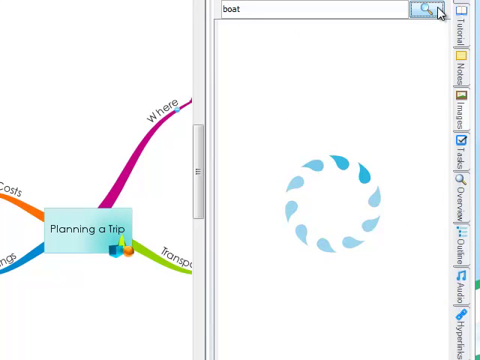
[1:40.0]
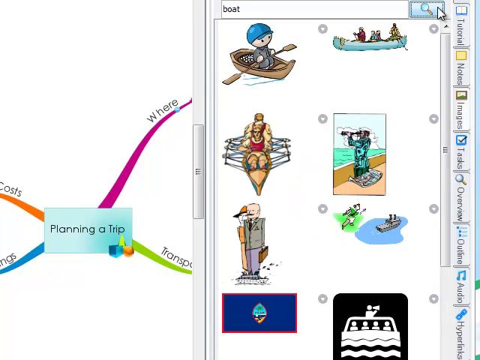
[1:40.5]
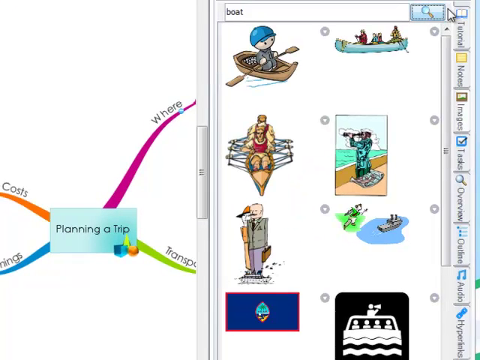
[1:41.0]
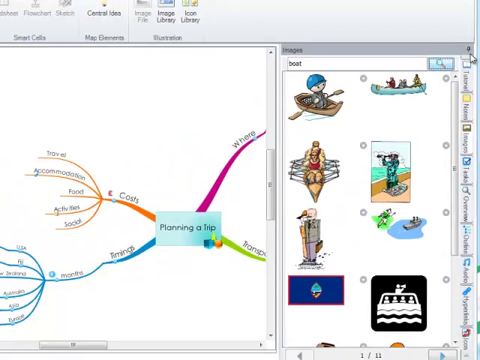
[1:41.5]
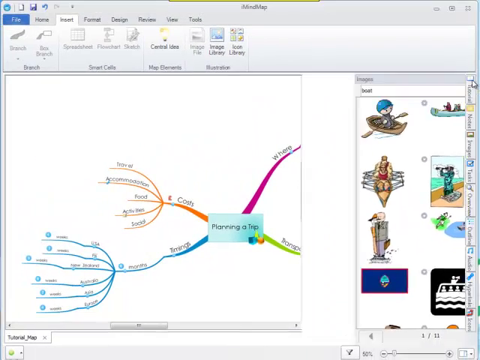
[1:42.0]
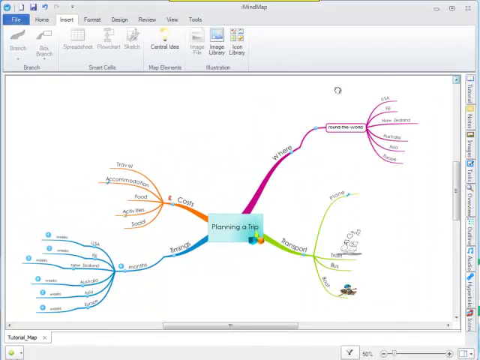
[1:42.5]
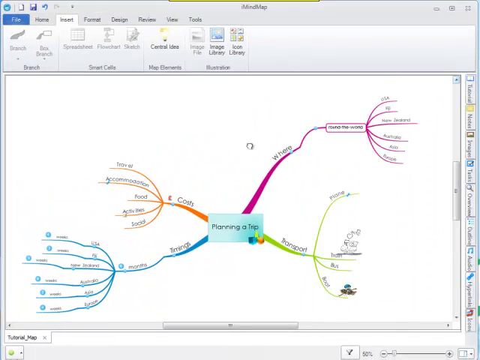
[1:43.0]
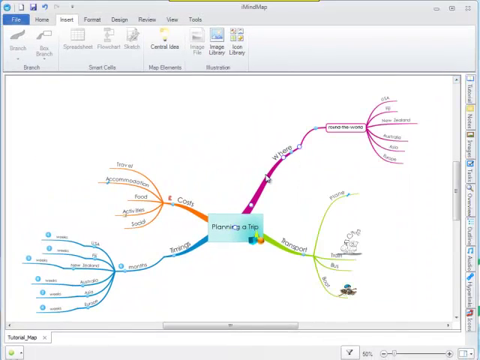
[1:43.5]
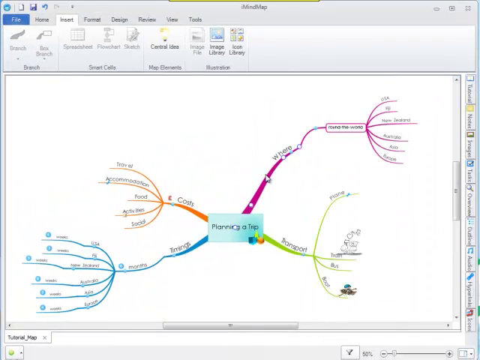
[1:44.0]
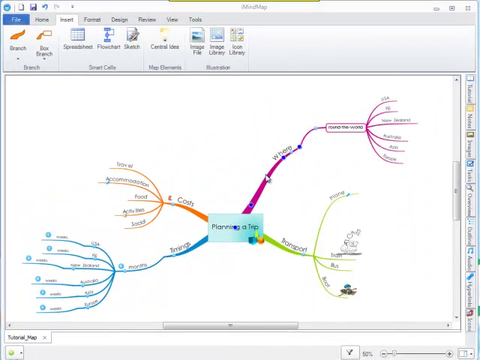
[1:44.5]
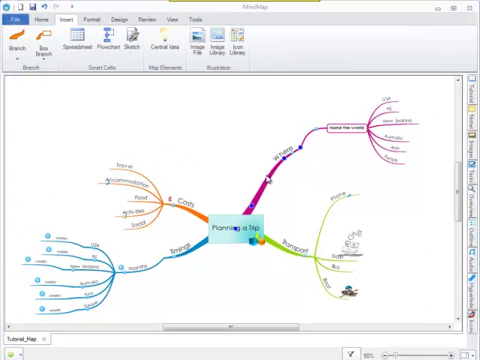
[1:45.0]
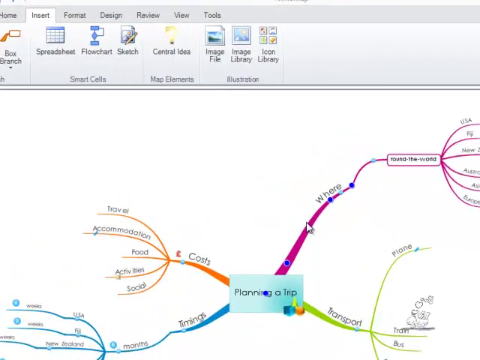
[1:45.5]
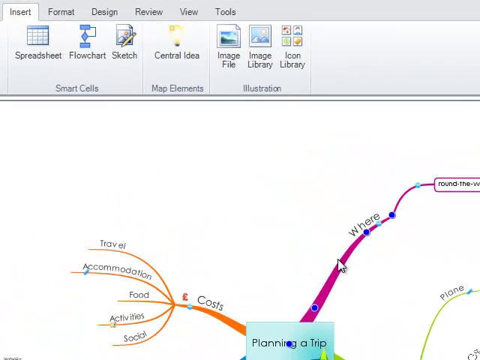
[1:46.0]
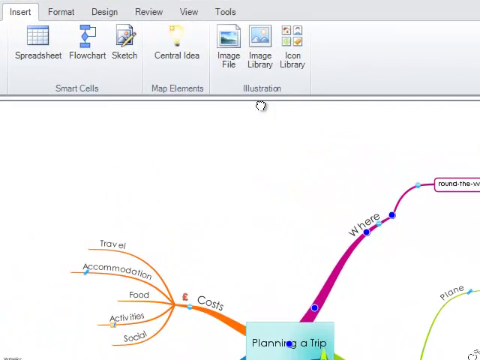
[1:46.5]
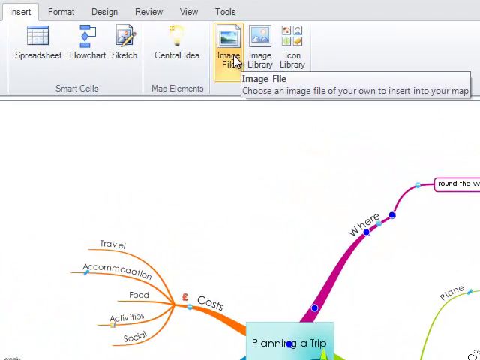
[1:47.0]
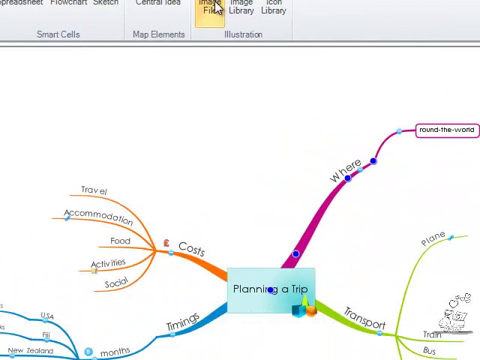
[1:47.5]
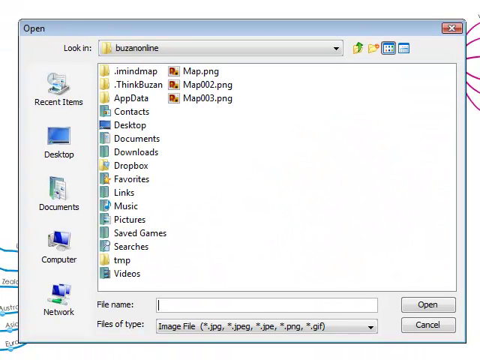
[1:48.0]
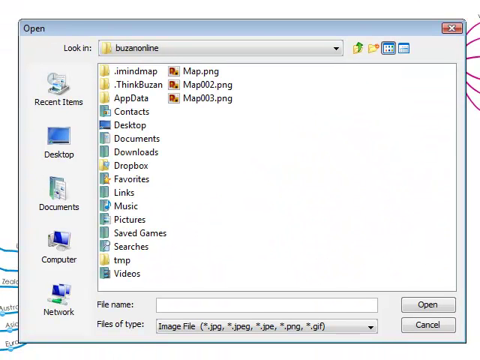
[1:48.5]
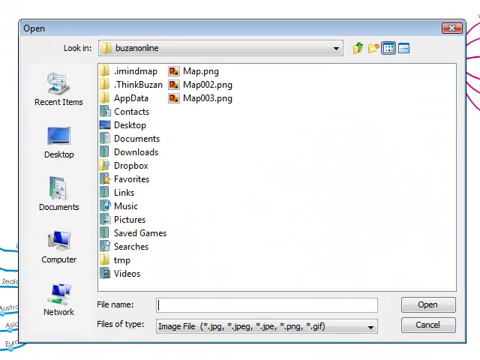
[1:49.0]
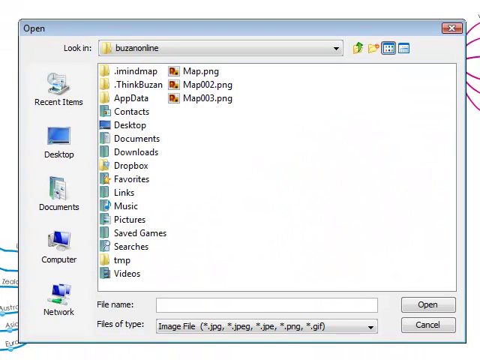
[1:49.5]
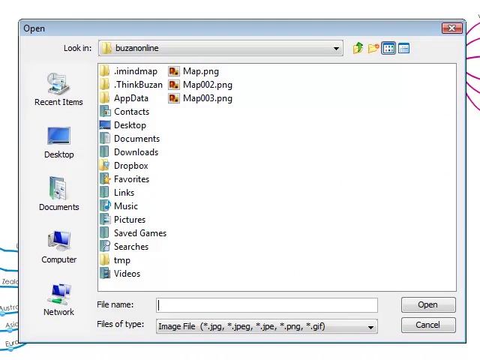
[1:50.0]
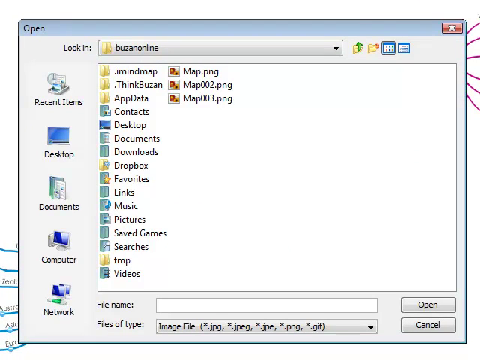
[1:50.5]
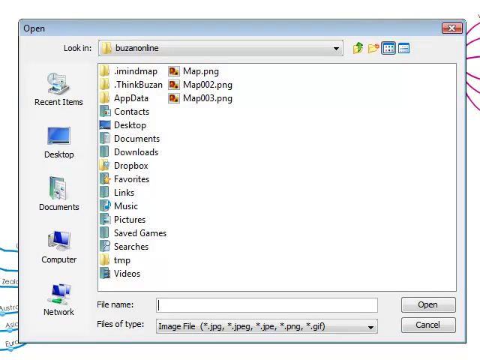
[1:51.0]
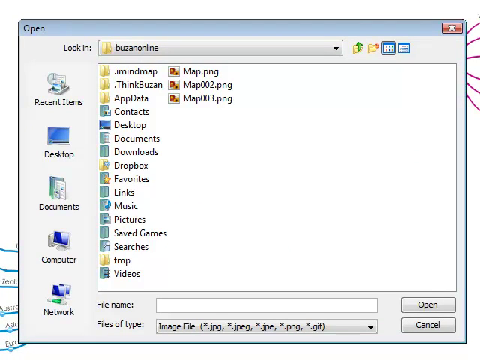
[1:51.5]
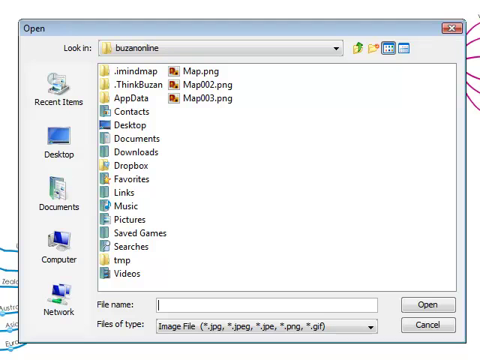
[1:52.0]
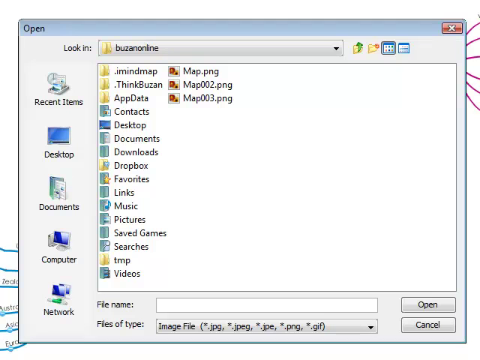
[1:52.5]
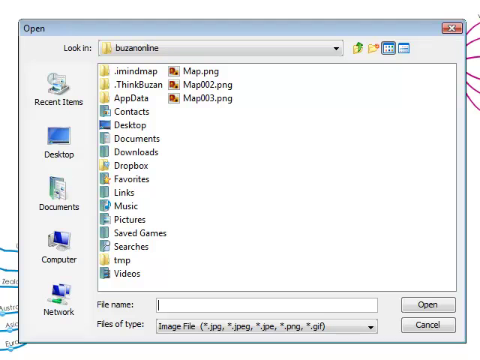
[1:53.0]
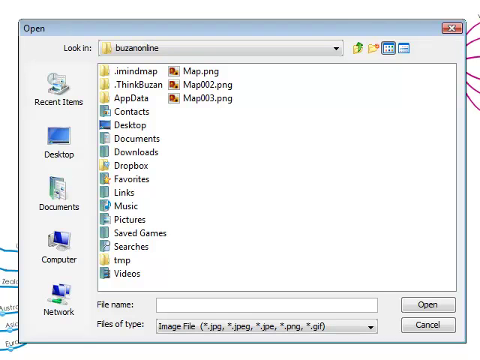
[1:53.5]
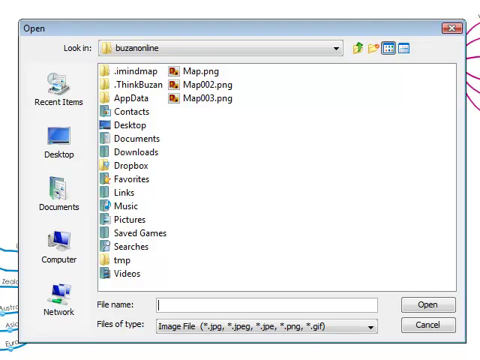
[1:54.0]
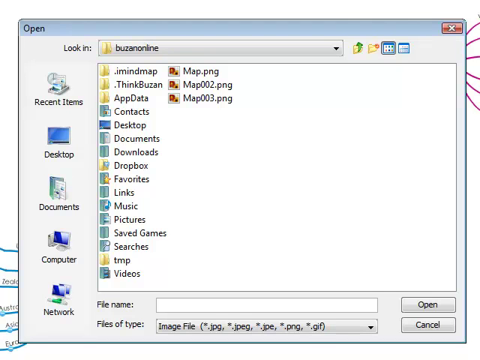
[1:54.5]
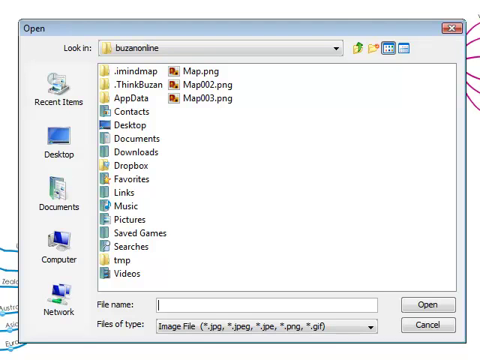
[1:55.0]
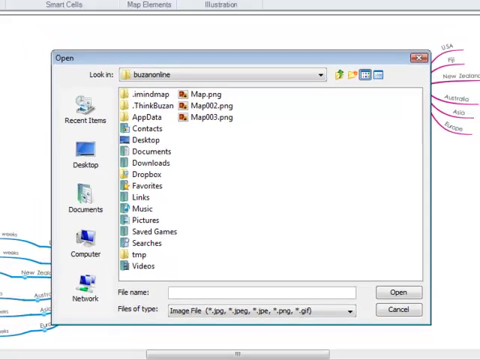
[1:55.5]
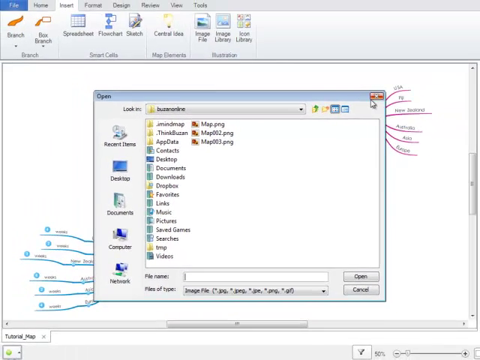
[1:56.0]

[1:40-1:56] The template is zoomed out and then in again until it lands on the insert section, which has seven options: bullet sheet, flowchart, sketch, central idea, image file, image library and icon library. The cursor moves to image file, and different files are shown. On the right, three new files with different titles appear, one titled "the Internet" and another "App and Data", and the list continues with things, music and pictures. On the extreme left are five sections: recent items, desktop, documents, computer and network. An item is highlighted, and next to it is written "file name". The view zooms out, and the video ends with the file name waiting to be typed.